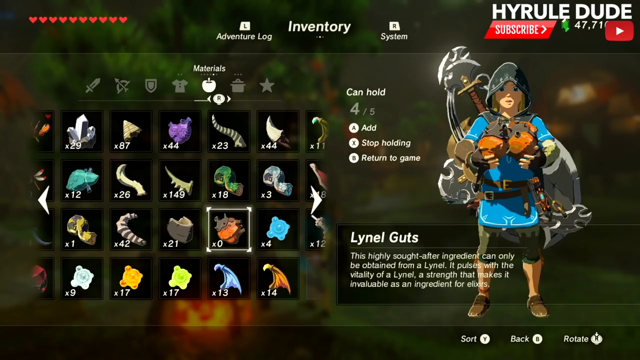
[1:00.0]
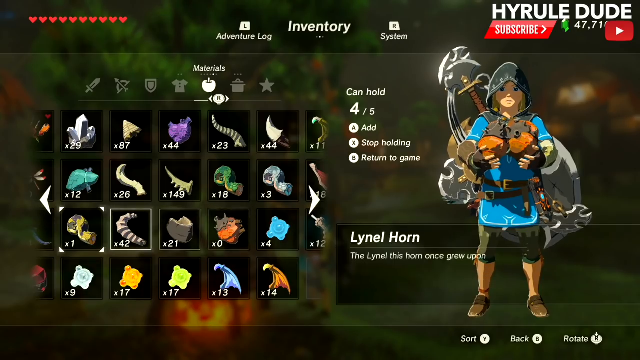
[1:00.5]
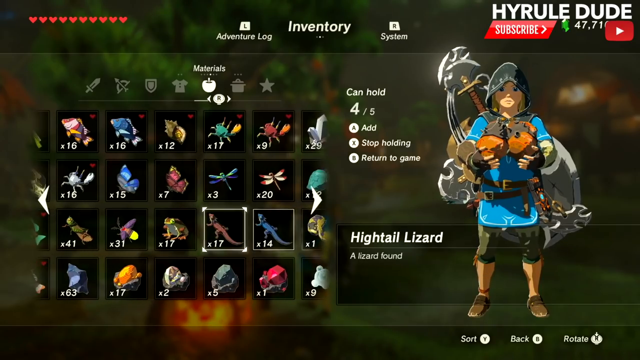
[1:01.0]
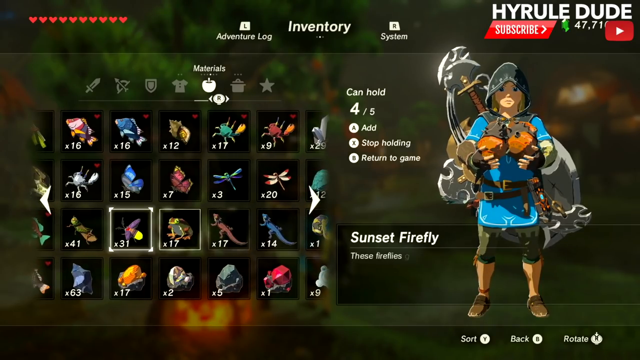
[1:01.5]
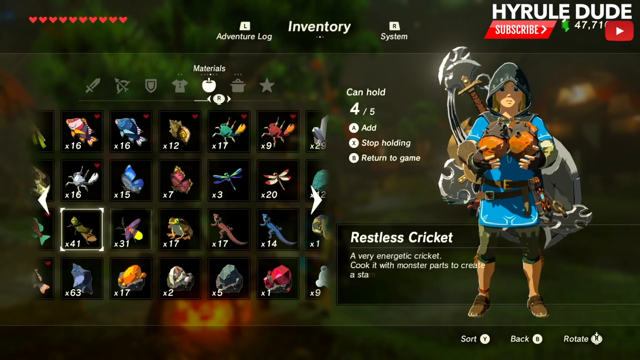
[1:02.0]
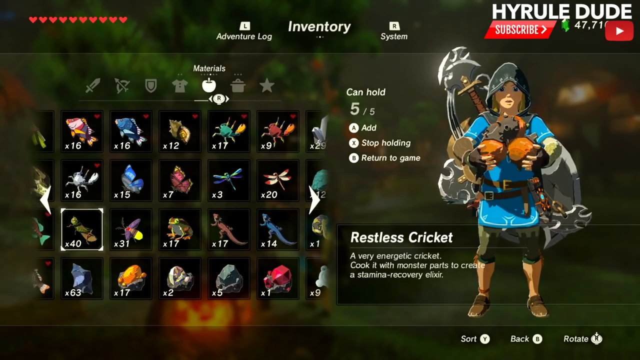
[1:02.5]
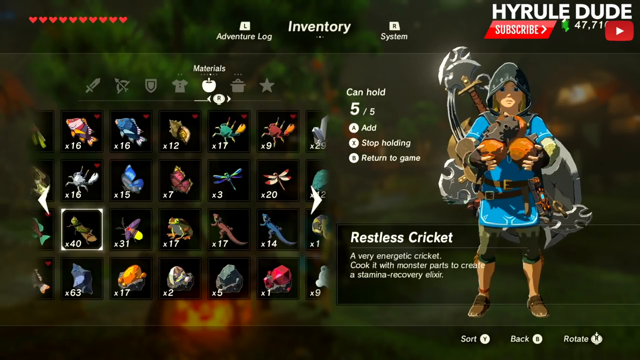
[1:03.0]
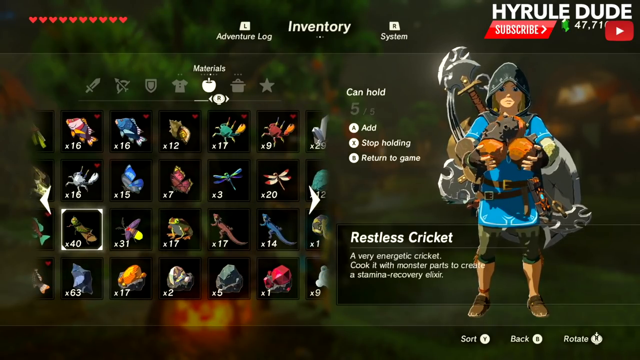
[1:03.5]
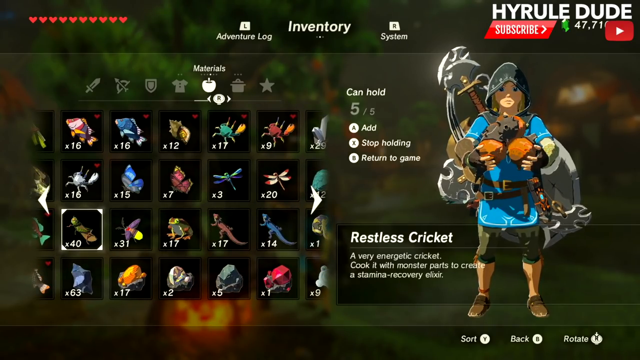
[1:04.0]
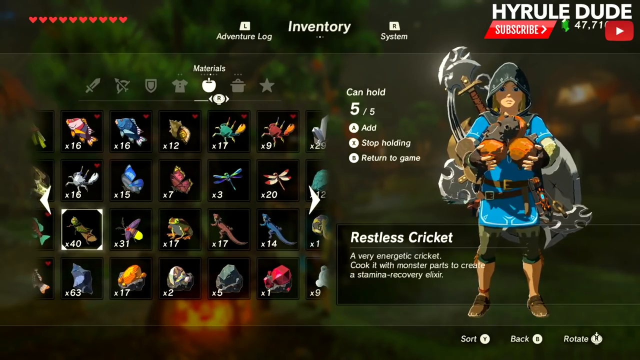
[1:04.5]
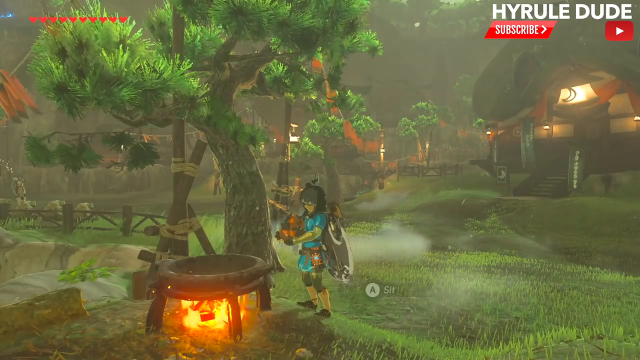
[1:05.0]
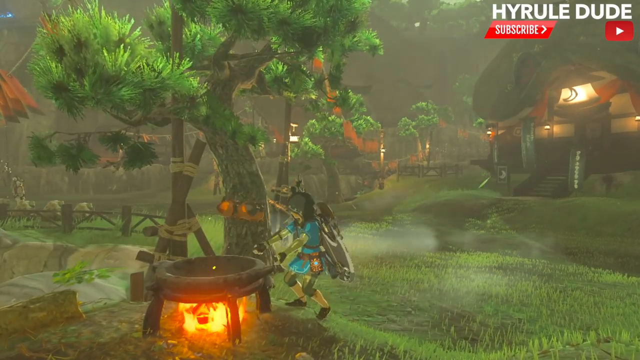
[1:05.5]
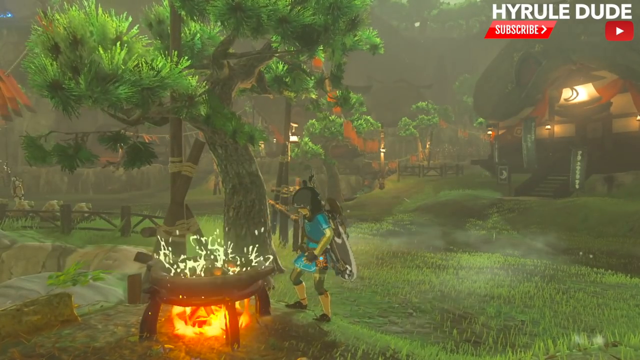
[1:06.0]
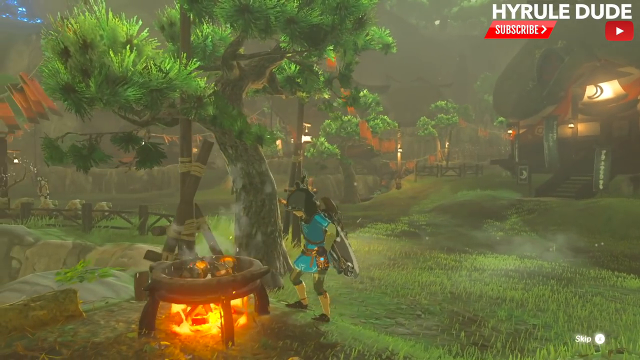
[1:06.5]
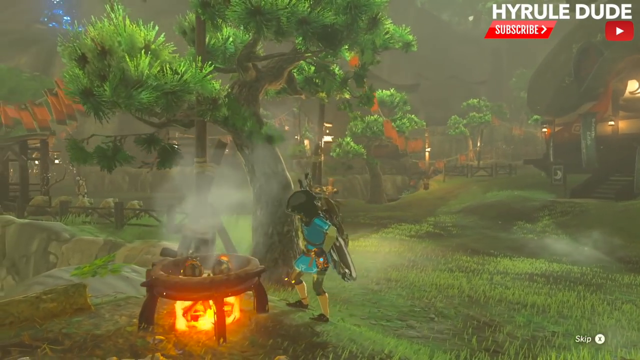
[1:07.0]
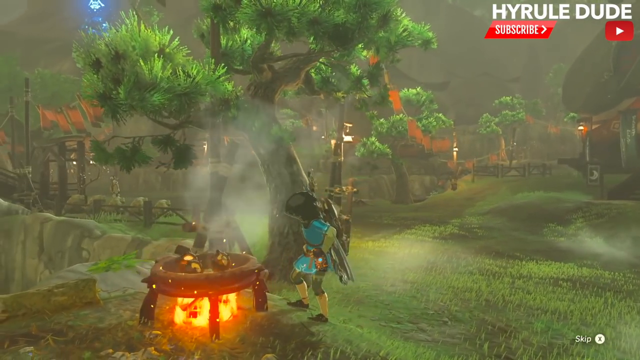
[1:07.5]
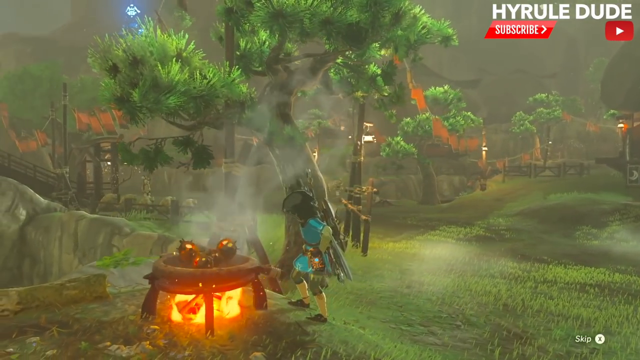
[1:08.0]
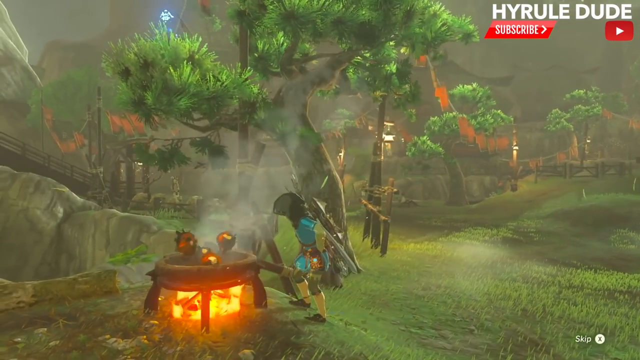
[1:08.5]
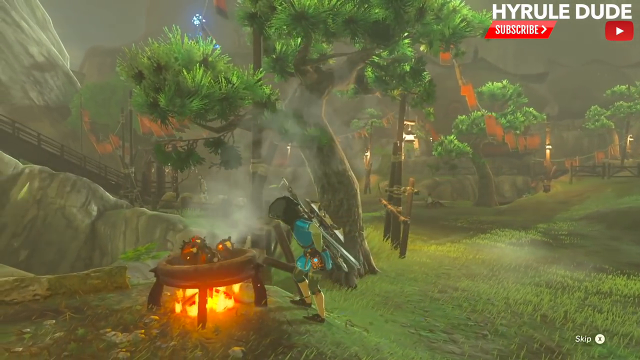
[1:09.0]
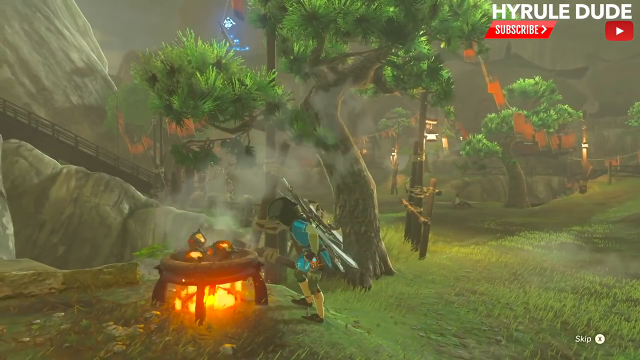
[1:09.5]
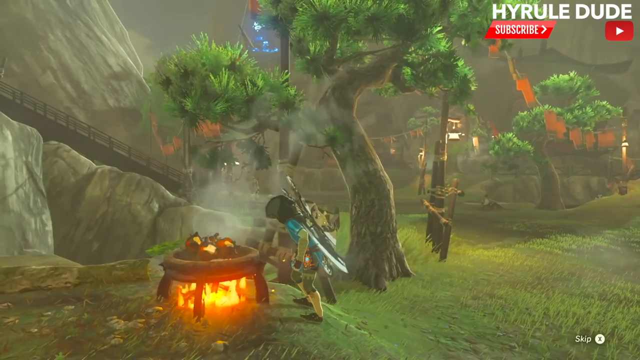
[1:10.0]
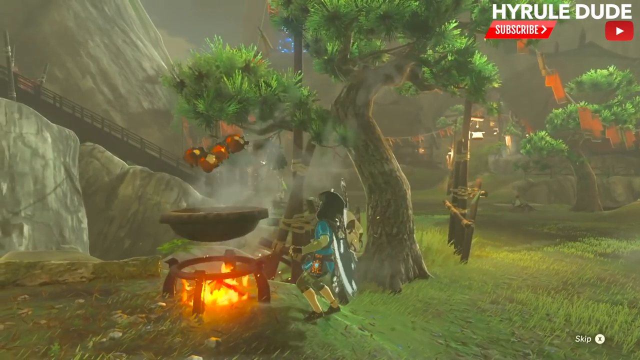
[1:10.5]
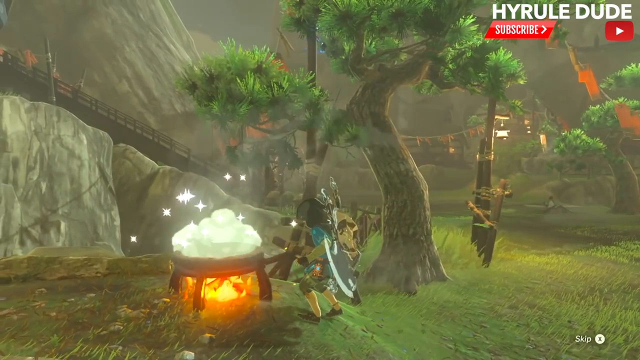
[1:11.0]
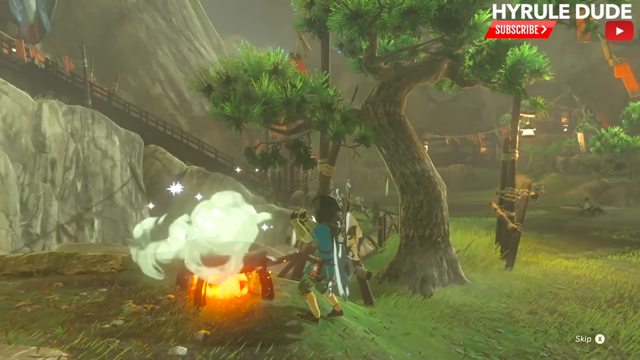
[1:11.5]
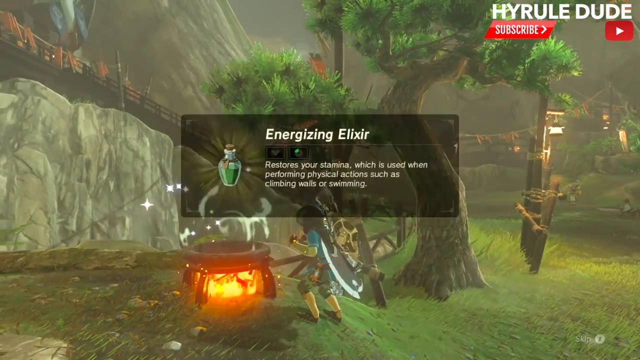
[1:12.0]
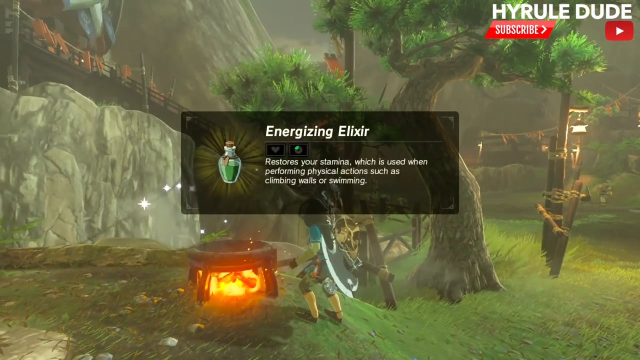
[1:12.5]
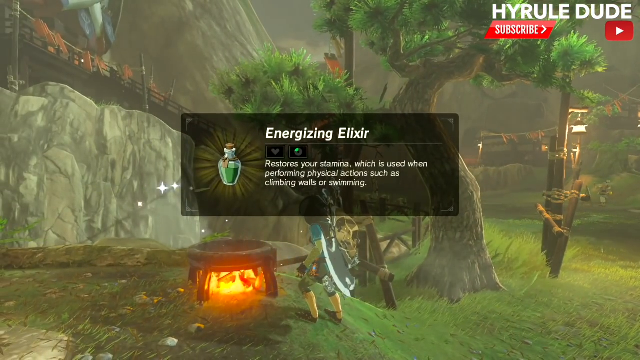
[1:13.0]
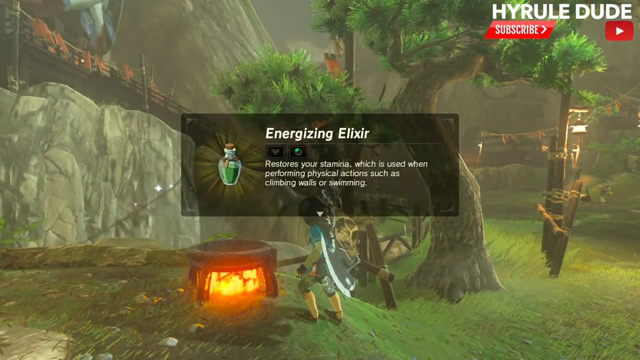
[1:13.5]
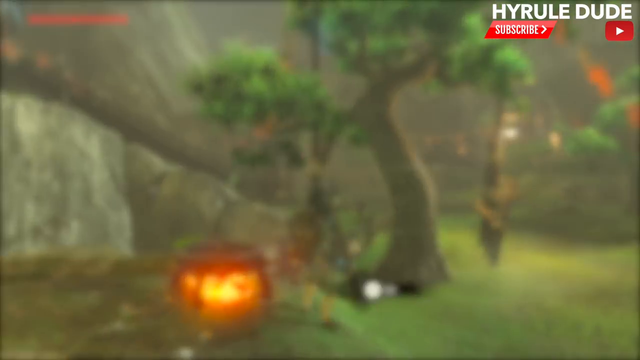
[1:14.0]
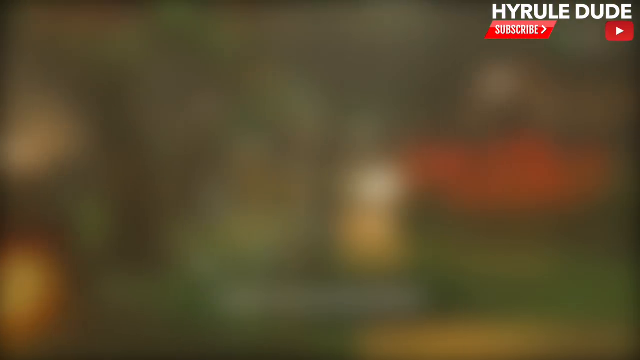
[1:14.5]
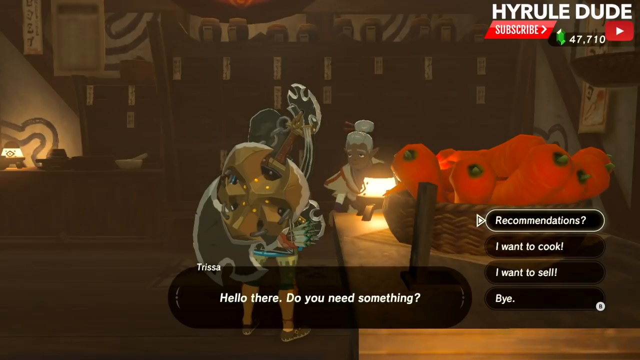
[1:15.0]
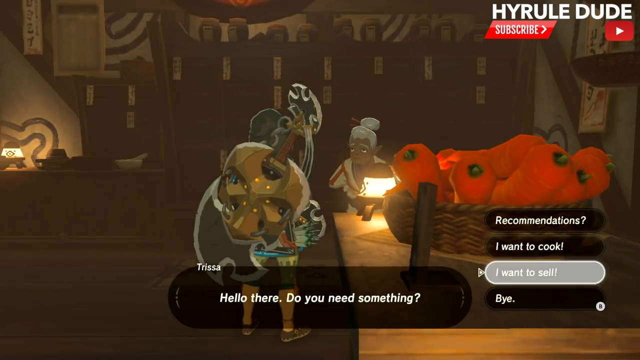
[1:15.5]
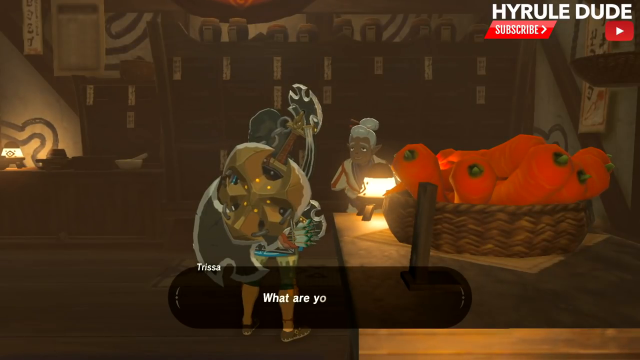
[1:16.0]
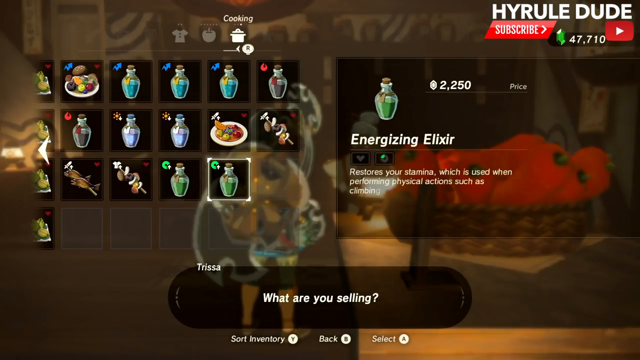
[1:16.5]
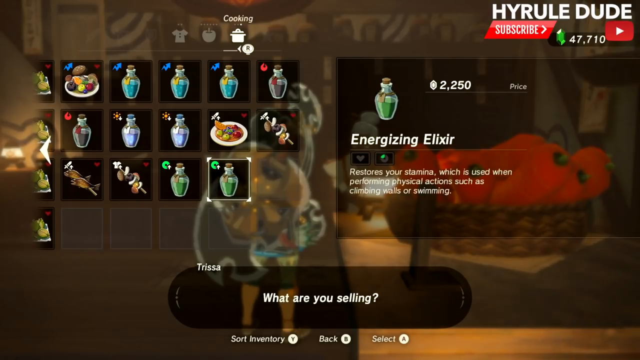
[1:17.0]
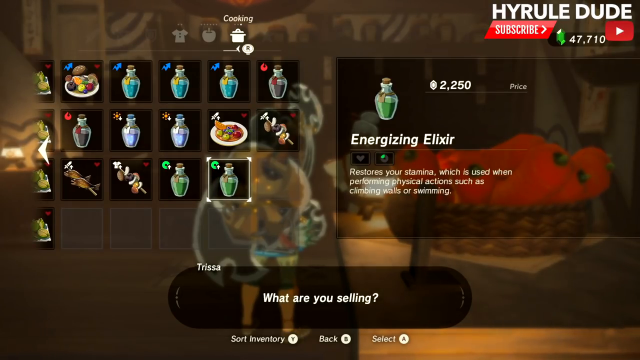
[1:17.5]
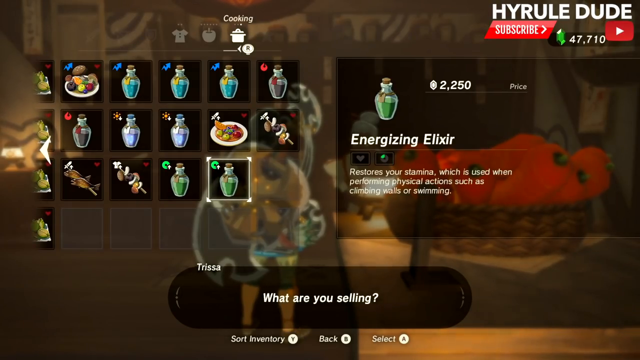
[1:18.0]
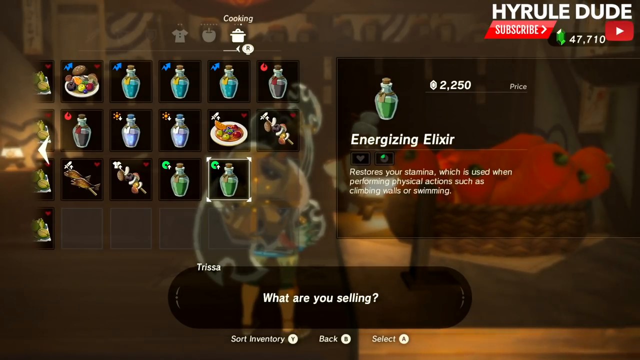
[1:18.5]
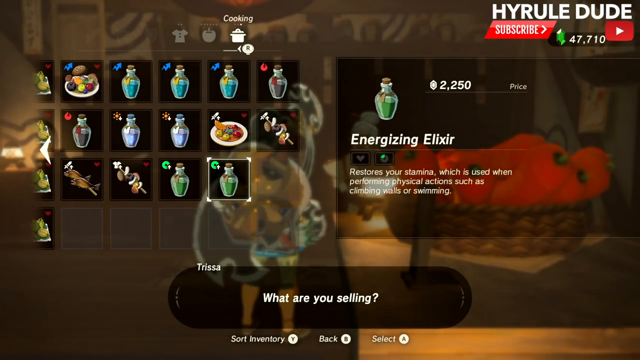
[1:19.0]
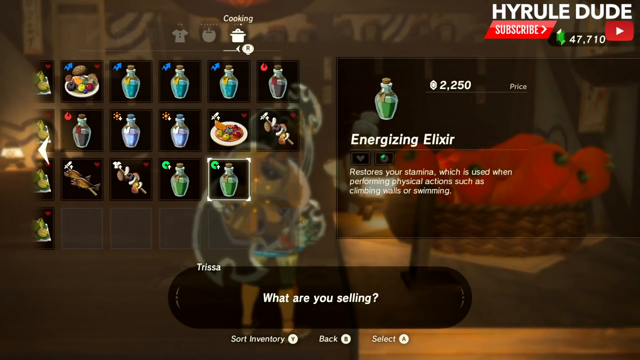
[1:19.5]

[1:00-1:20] The screen of a game shows a character who looks like a young person dressed in a blue tunic and dark shorts. He has an axe strapped to his back along with more weapons like large curved blades, and he holds some items in his hands. To his left on the screen is a matrix showing images of different items, the inventory. Number 14 is selected, then number 40, and he tosses some objects from number 40 into a large open pan over a large flame. Beside him is a tree with green leaves. The camera pans slowly around him as smoke rises from the objects in the pan. The setting is a field with green grass and trees, and the lighting is rather dim. Large boulders are on the left side. An image of an elixir in a green bottle pops up in the middle of the screen, with text above it reading "energizing elixir restores your stamina which is used when performing physical actions such as climbing walls or swimming."